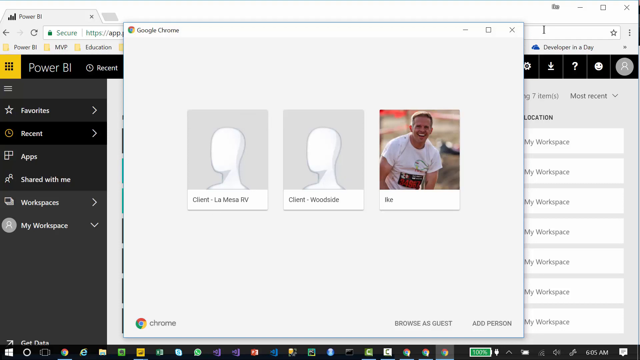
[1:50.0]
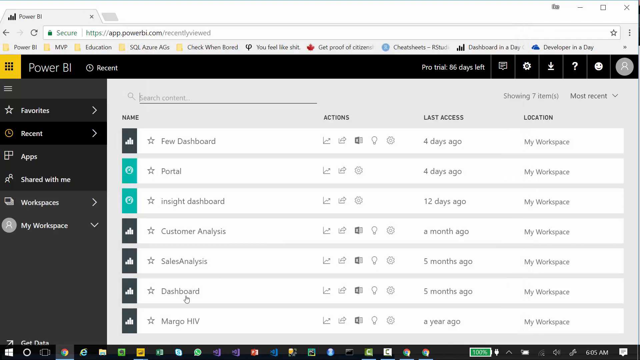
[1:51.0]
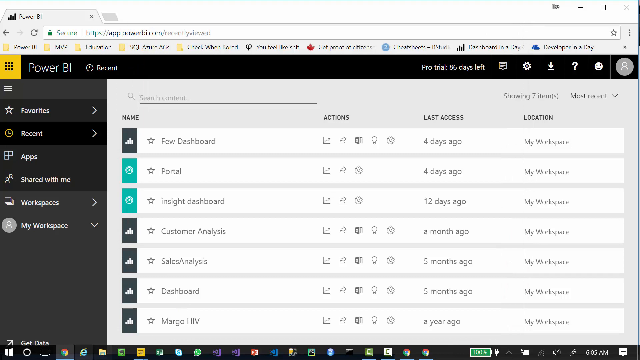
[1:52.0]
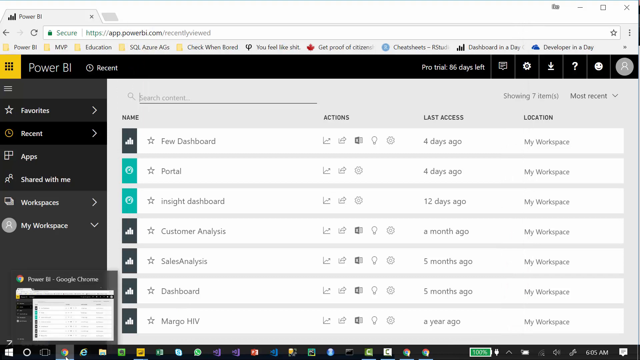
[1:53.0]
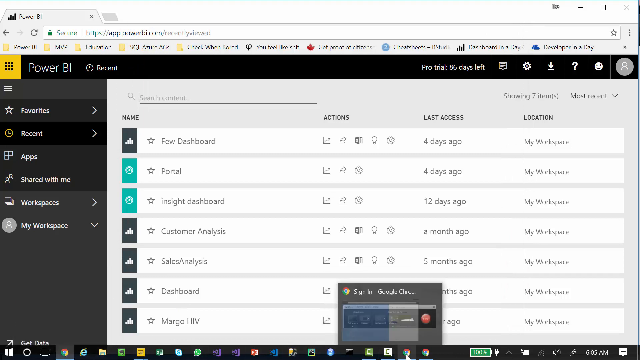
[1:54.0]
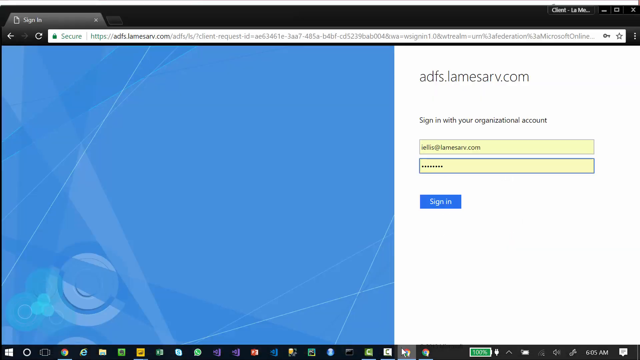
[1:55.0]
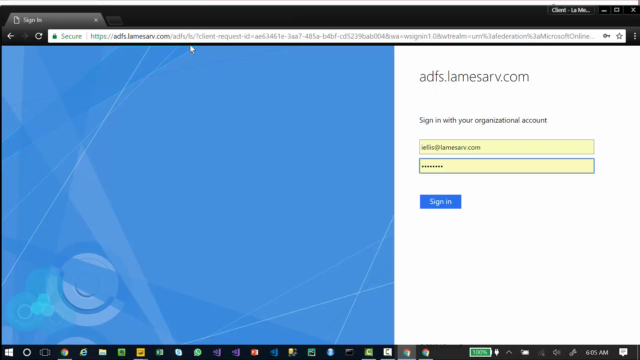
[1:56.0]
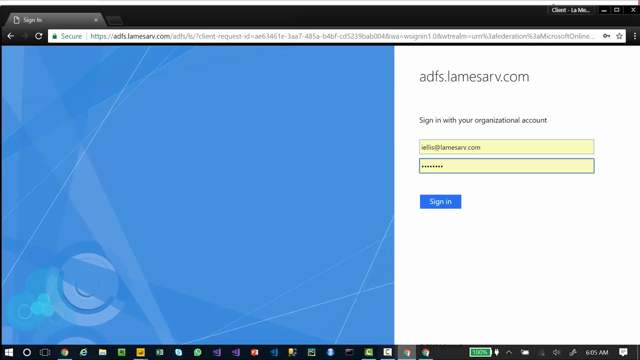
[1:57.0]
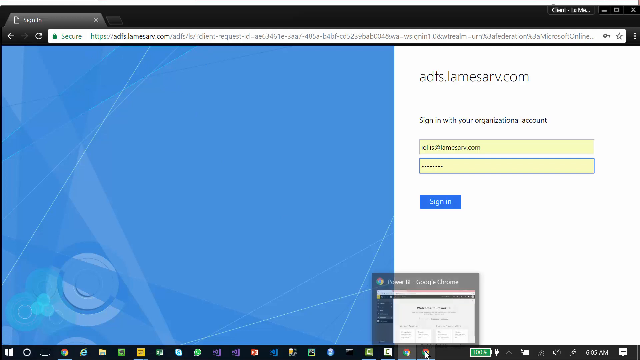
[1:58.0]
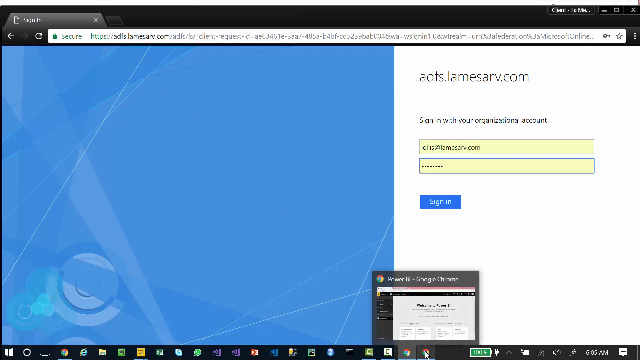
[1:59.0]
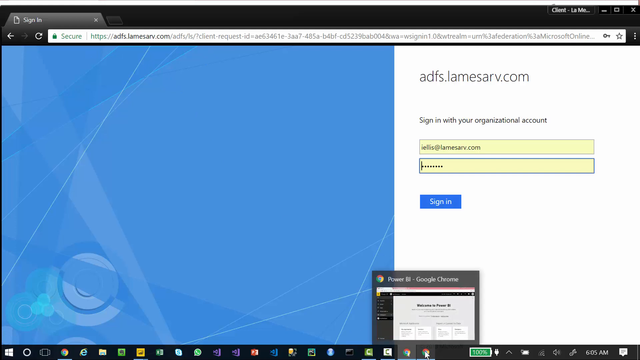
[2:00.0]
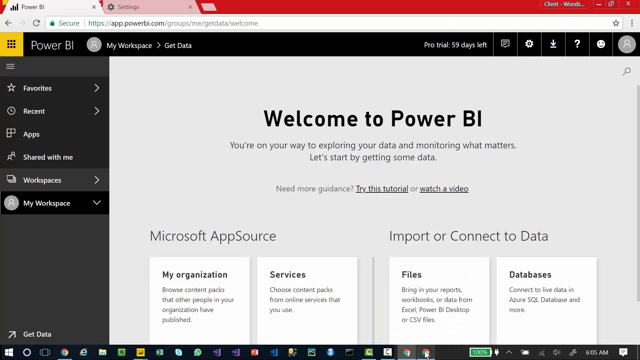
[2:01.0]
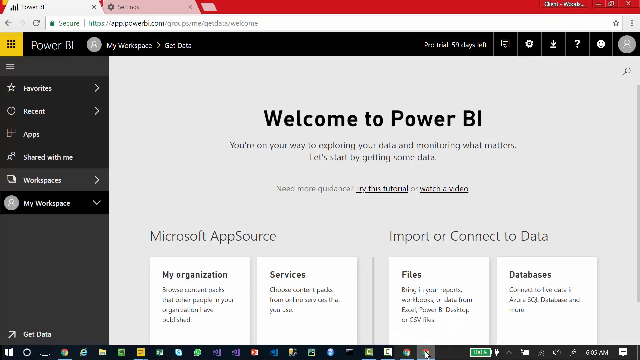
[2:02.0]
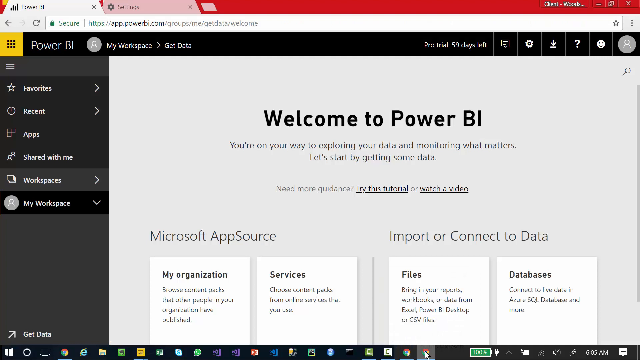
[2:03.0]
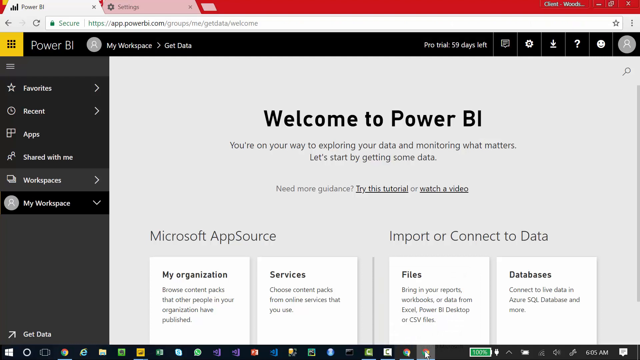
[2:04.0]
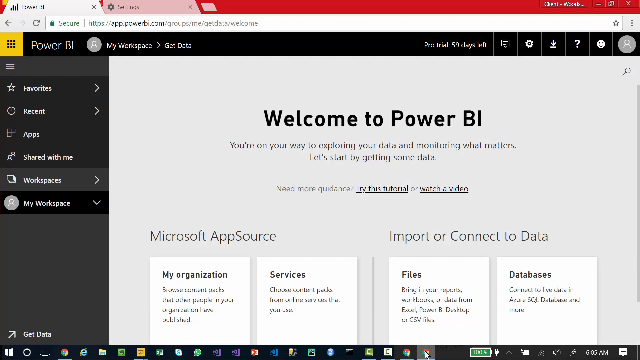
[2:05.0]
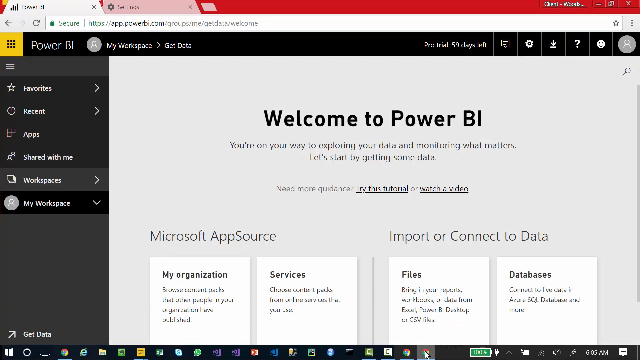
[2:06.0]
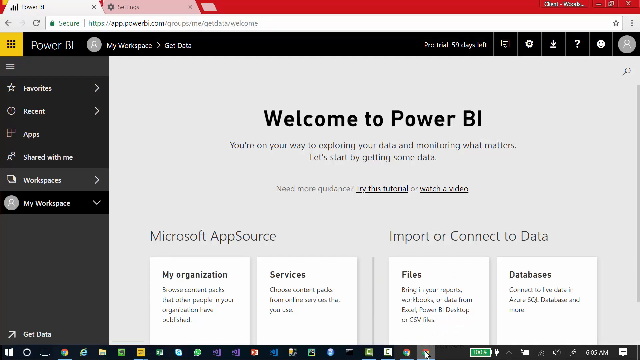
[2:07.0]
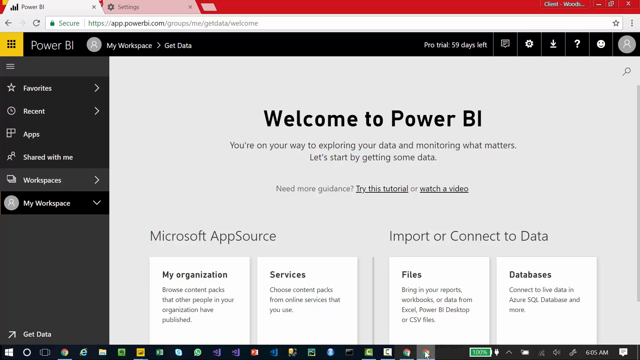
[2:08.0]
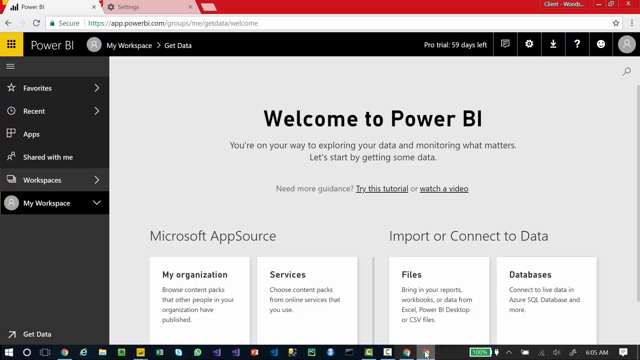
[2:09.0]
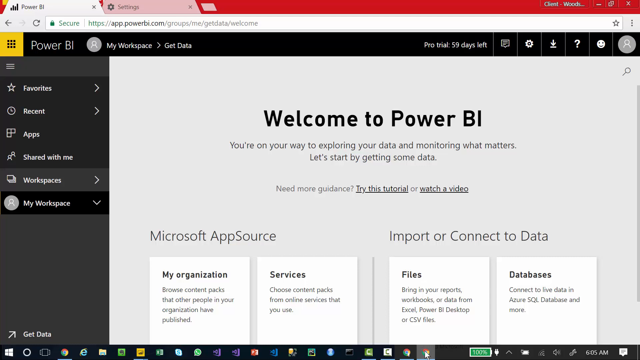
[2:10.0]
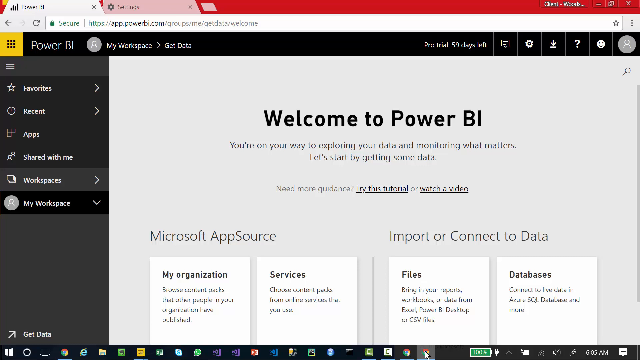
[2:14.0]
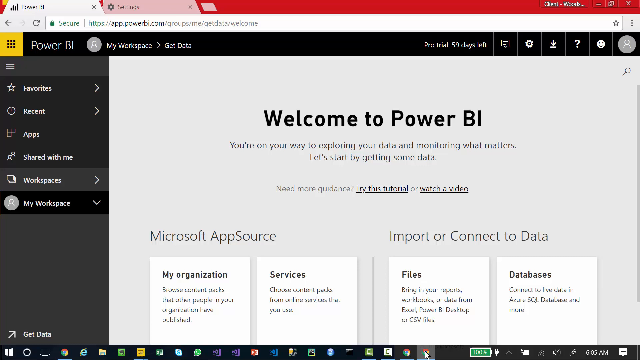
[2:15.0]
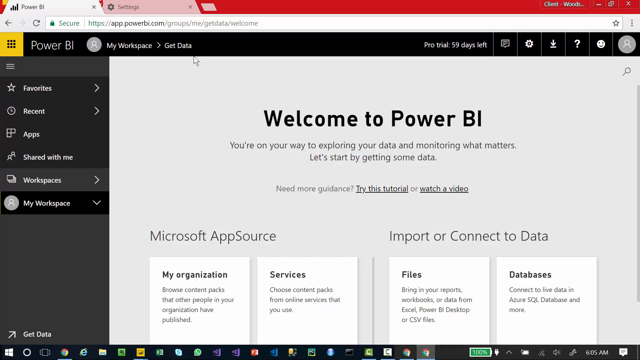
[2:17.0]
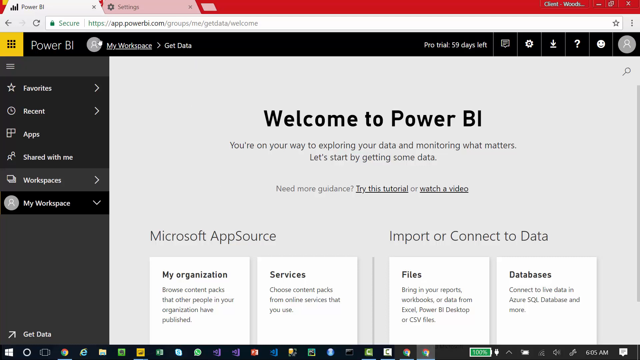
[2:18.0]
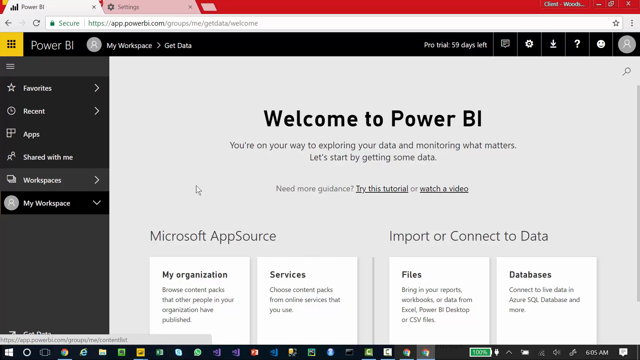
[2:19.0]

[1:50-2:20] A section offers a number of options to choose from, including ADFS, LAM, Microsoft App Service, Import or Connect Data, Welcome to Power BI, and others. There are also options such as Ike, Client, and other clients to click on in the Power BI section.